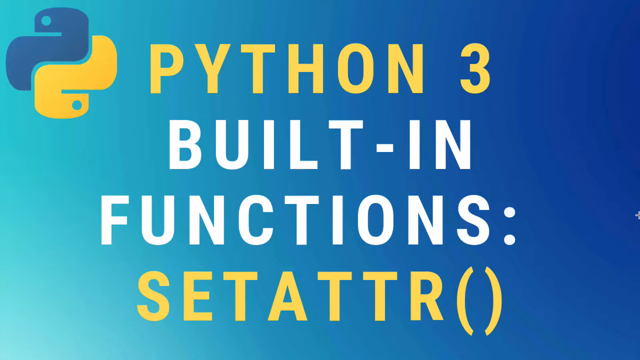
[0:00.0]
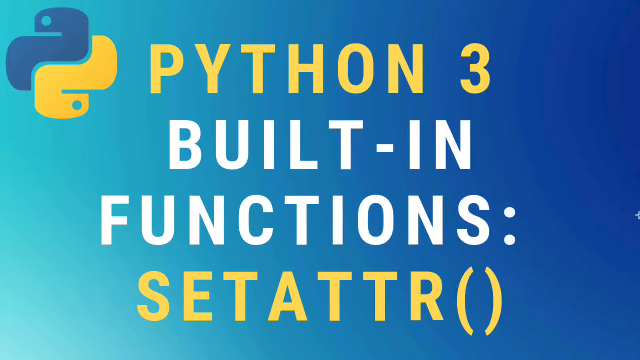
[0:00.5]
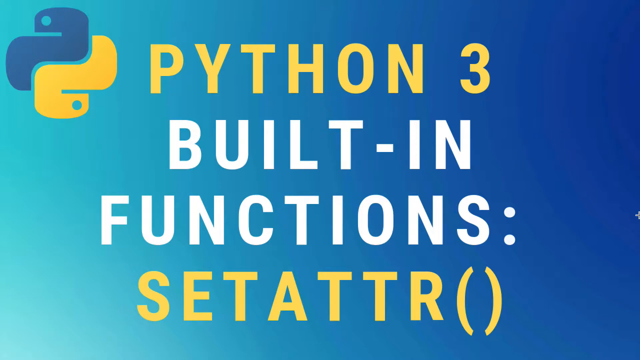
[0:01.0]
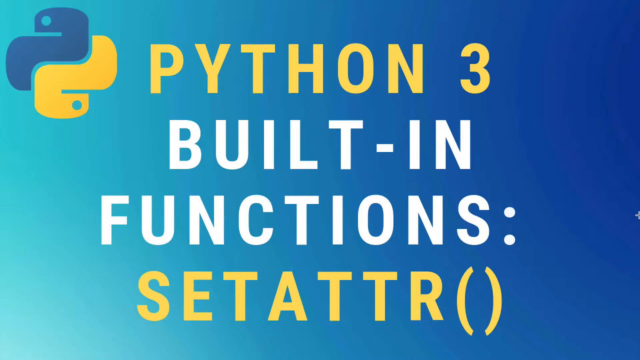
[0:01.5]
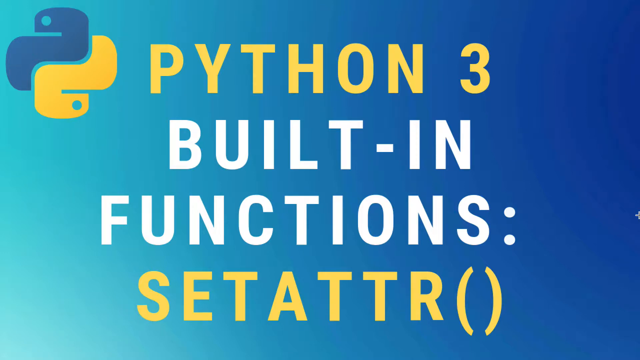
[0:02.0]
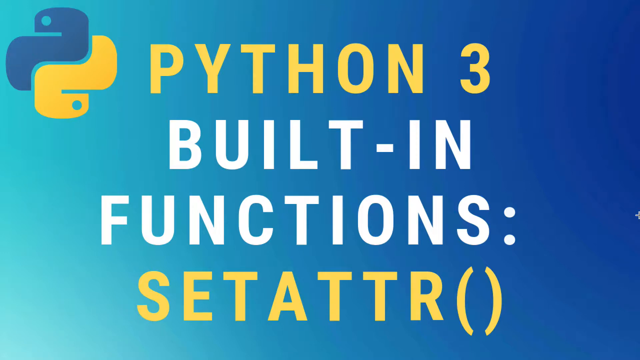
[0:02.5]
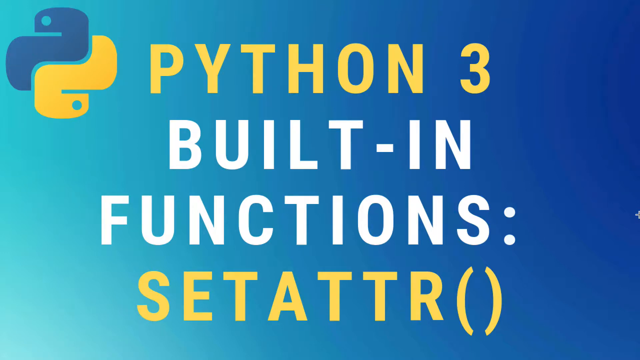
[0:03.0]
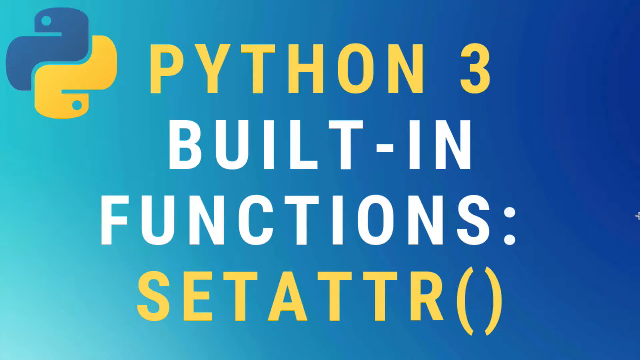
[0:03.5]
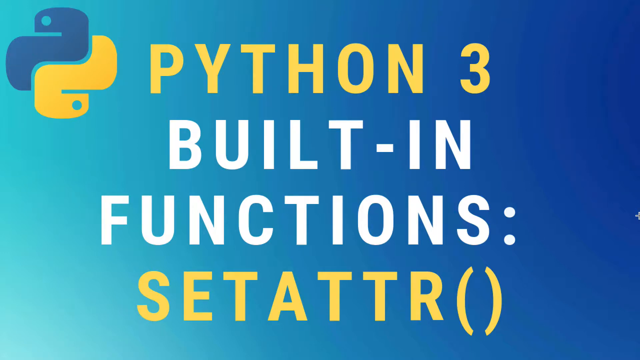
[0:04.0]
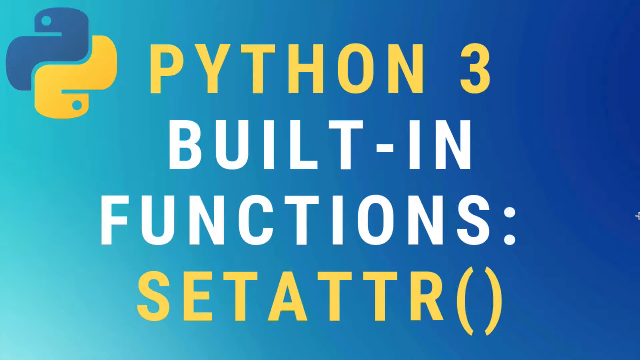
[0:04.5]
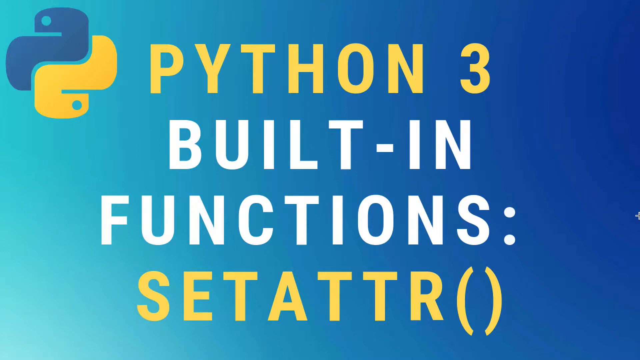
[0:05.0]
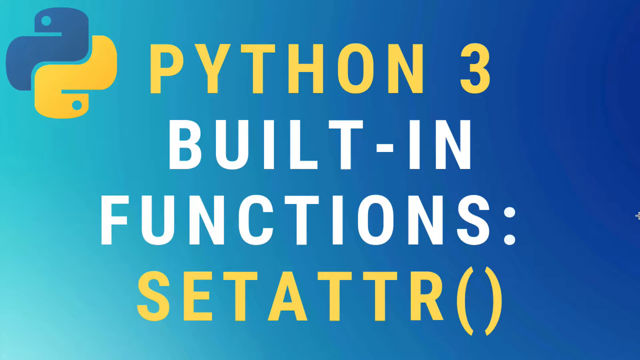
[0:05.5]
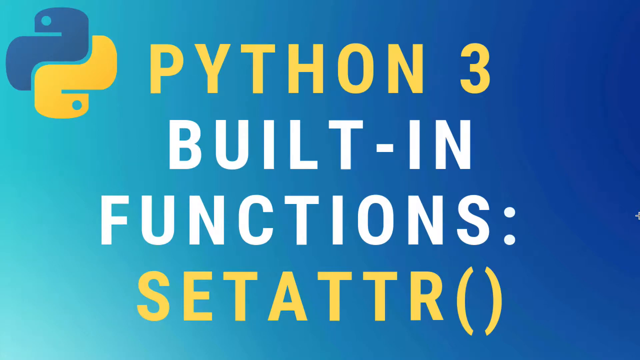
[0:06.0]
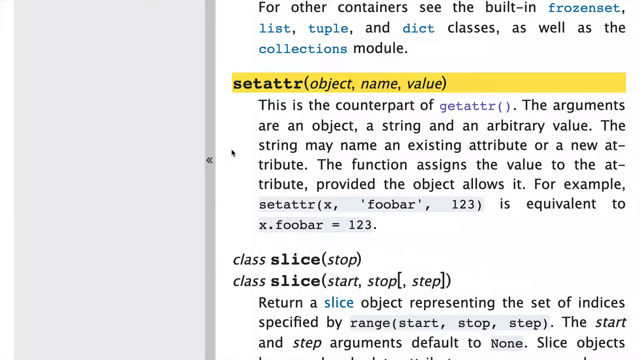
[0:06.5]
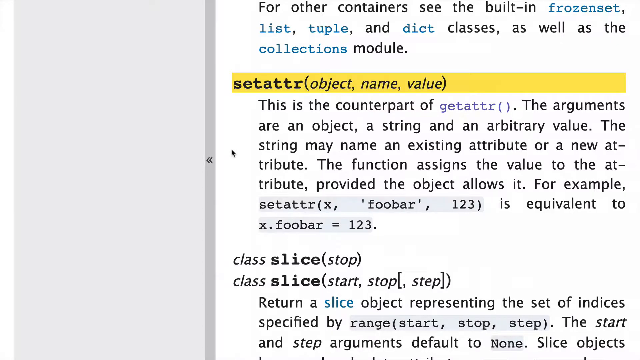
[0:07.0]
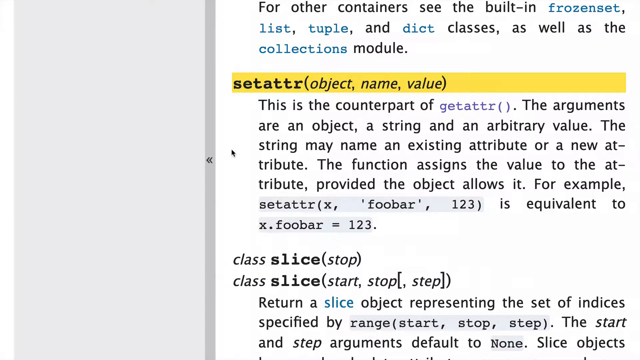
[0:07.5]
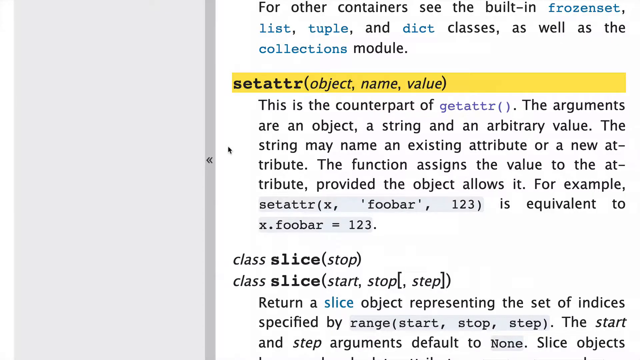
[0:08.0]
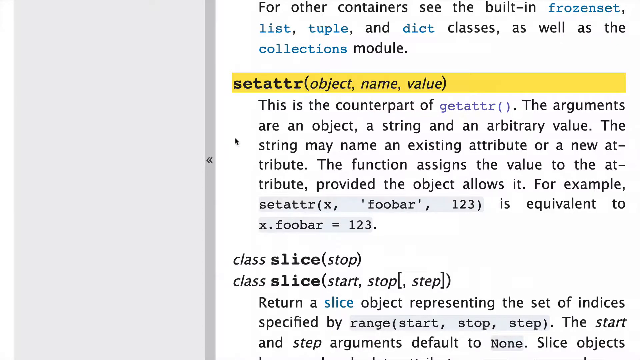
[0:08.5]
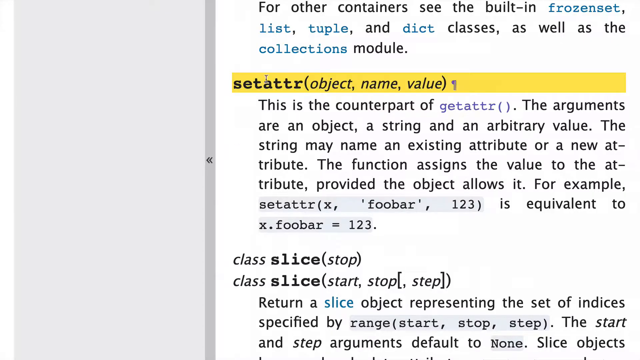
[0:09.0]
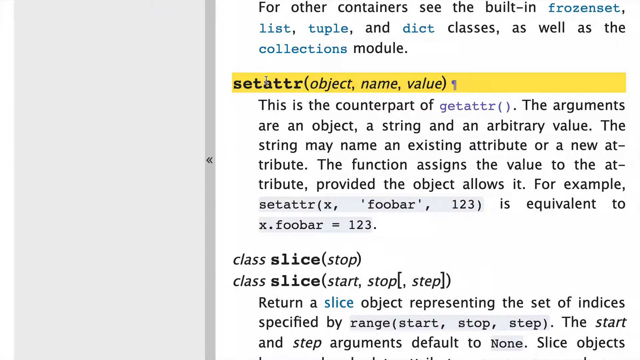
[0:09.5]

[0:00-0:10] A title screen reads "Python 3, built-in functions, set ATTR." The background is blue, dark blue on the right and light blue on the left, with yellow and white lettering. Next, text appears that reads: "For other containers see the built-in frozenset, list, tuple, and diet classes, as well as the collections module." The words "frozenset," "list," "tuple," "diet" and "collections" are in blue, and the rest is in black lettering. Below that it reads "setattr (object, name, value). This is the counterpart of getattr (). The arguments are an object, a string and an arbitrary value. The string may name an existing attribute or a new attribute. The function assigns the value to the attribute, provided the object allows it. For example, setattr (x, foobar, 123) is equivalent to x.foobar =123." The word "getattr" is in blue and the rest of the words are in black. The text gives an explanation of the words.